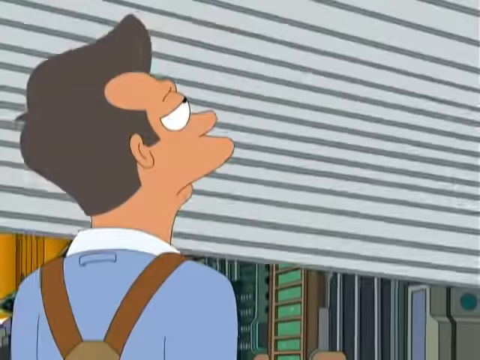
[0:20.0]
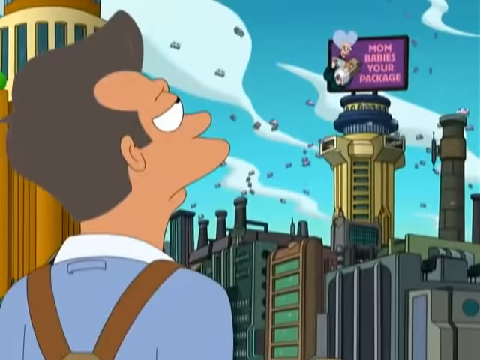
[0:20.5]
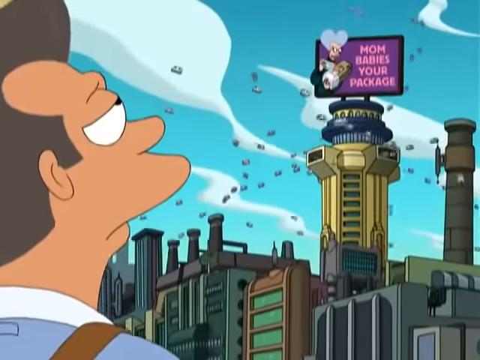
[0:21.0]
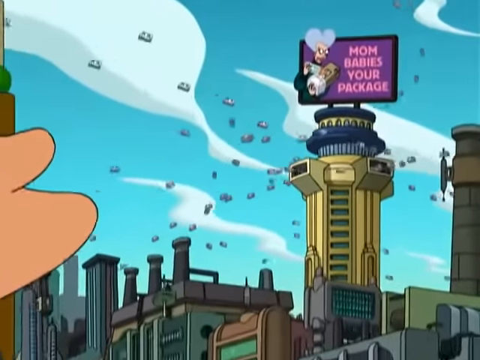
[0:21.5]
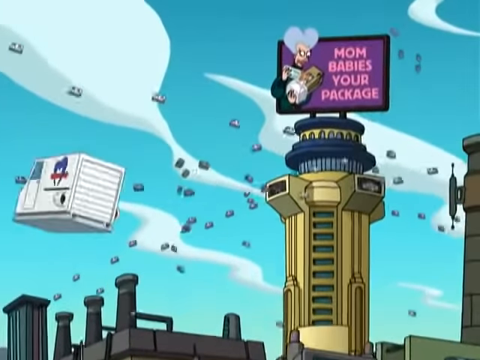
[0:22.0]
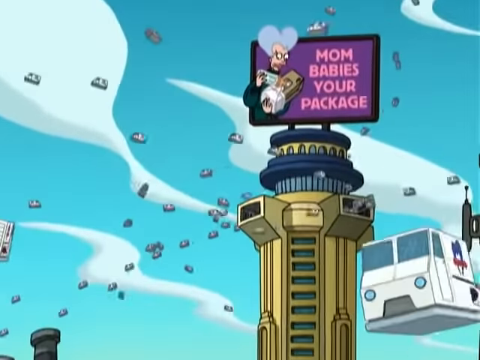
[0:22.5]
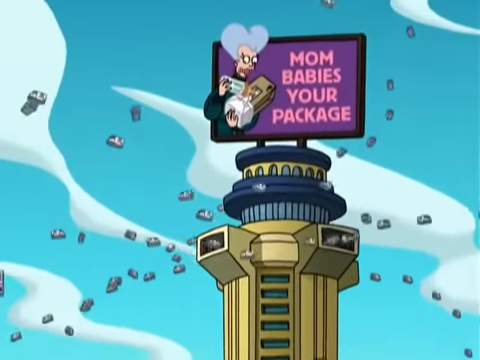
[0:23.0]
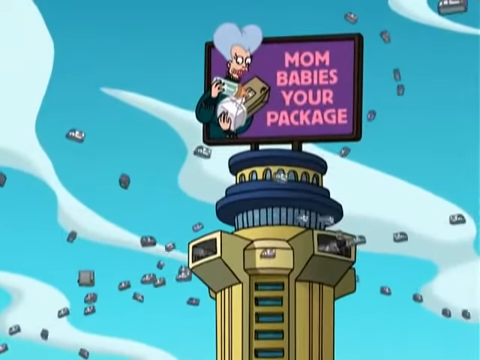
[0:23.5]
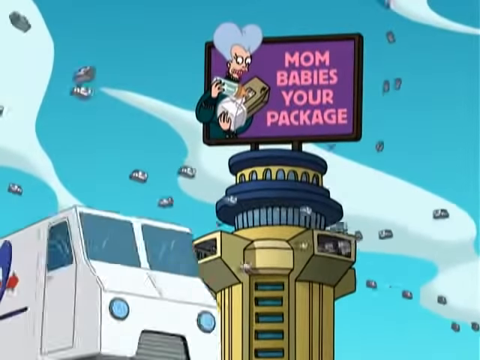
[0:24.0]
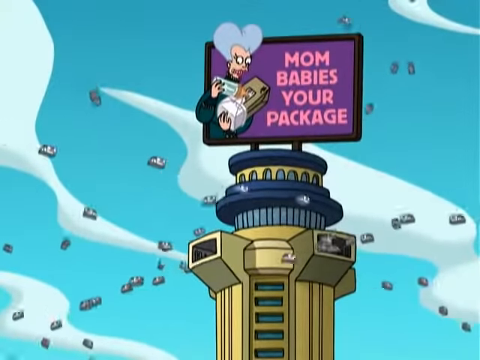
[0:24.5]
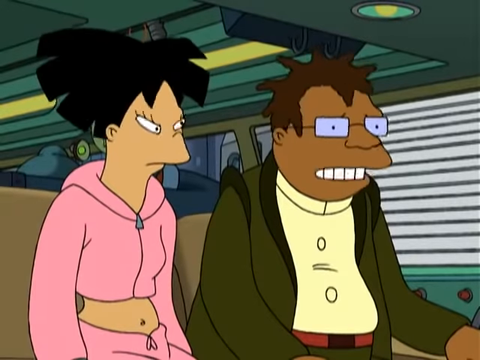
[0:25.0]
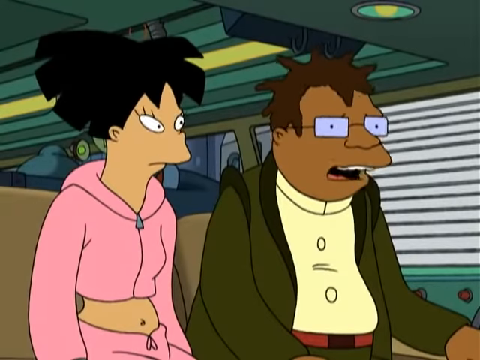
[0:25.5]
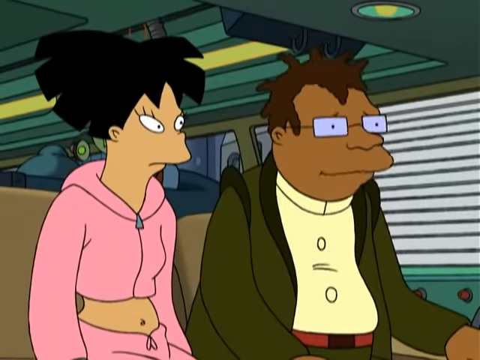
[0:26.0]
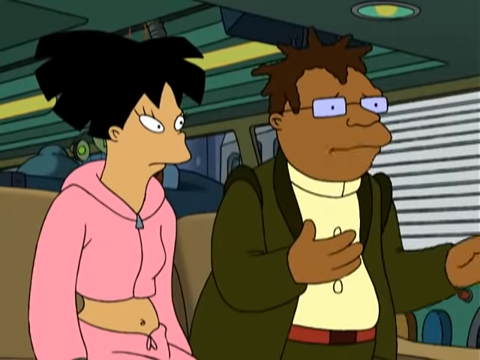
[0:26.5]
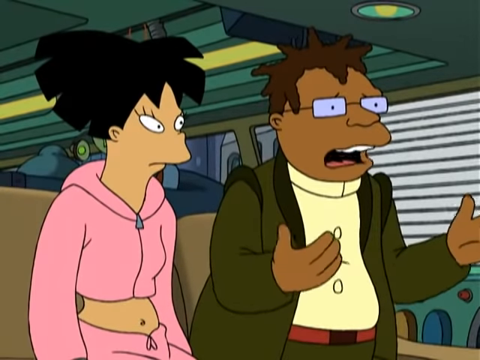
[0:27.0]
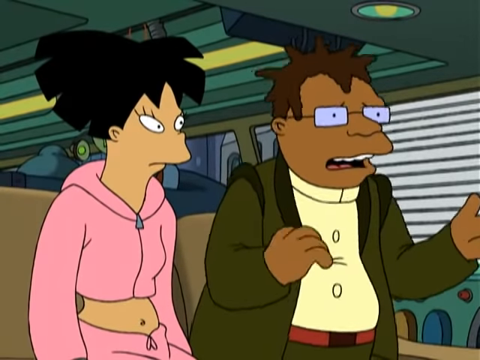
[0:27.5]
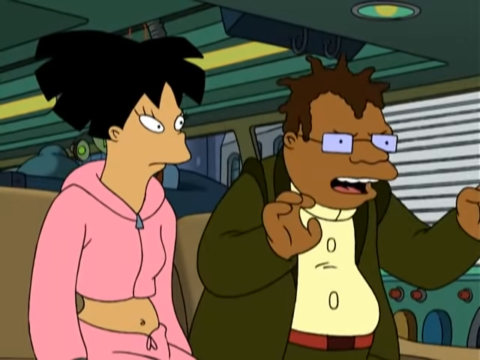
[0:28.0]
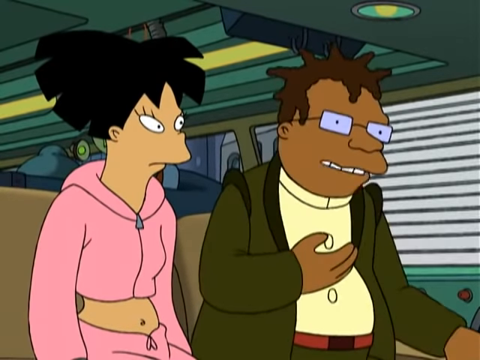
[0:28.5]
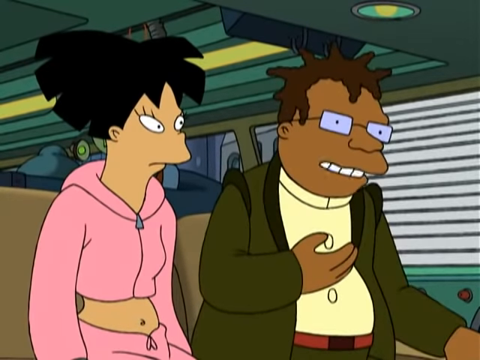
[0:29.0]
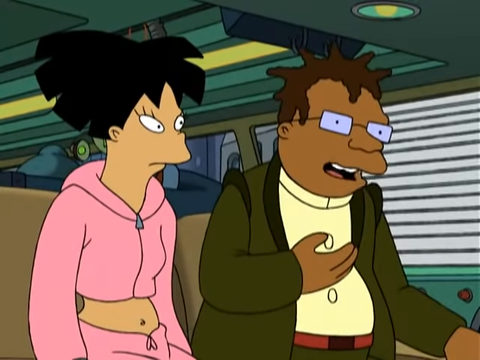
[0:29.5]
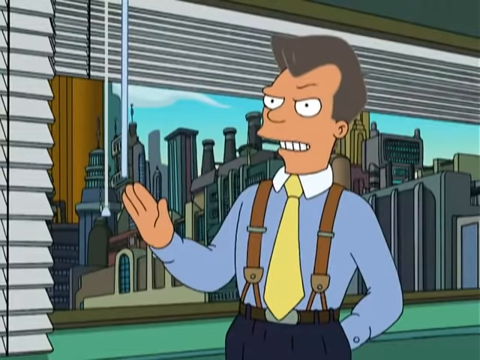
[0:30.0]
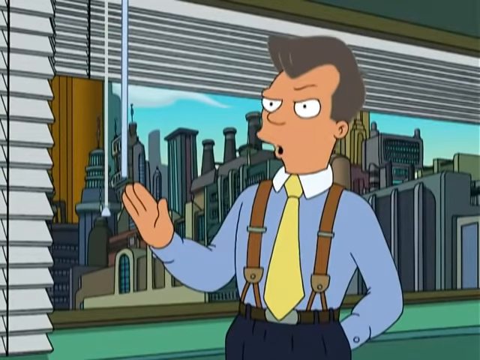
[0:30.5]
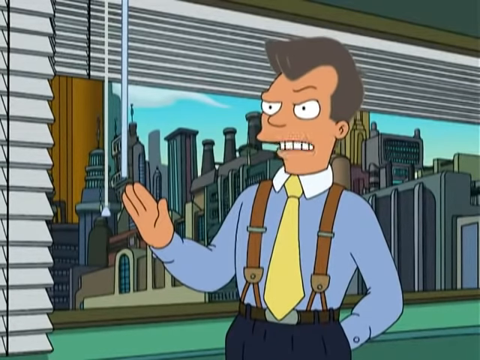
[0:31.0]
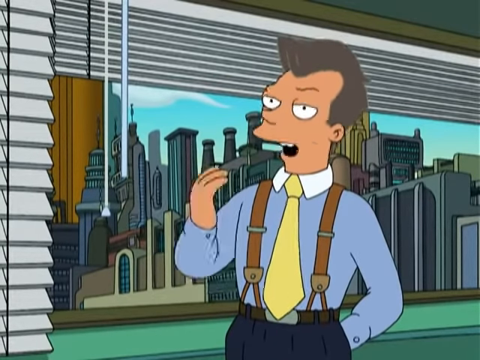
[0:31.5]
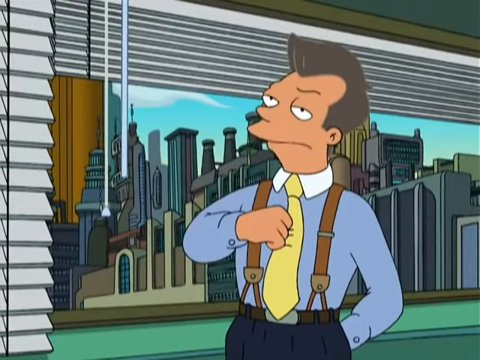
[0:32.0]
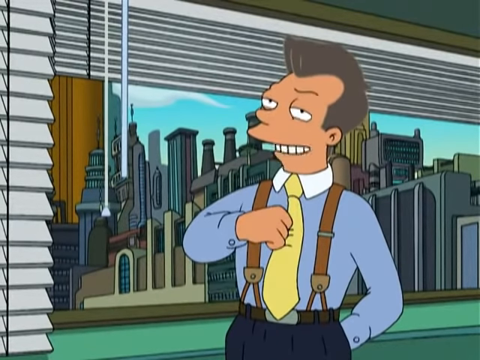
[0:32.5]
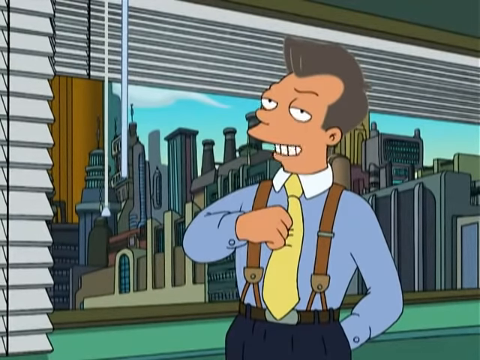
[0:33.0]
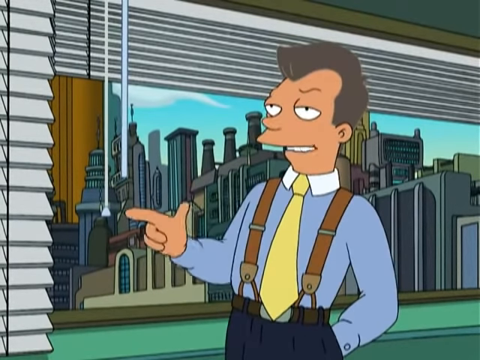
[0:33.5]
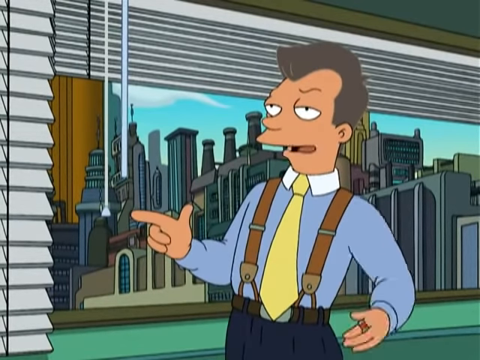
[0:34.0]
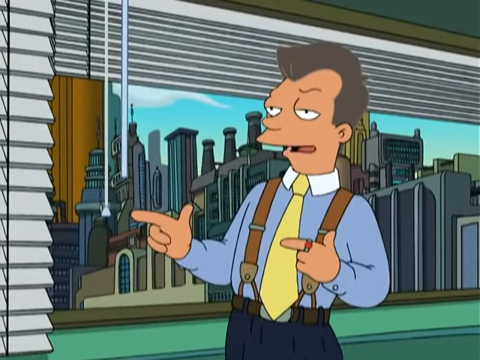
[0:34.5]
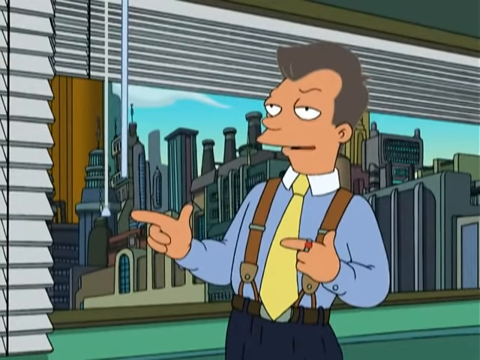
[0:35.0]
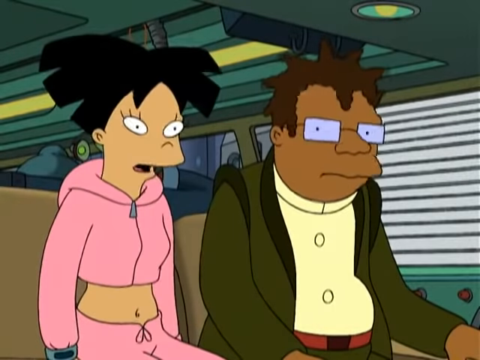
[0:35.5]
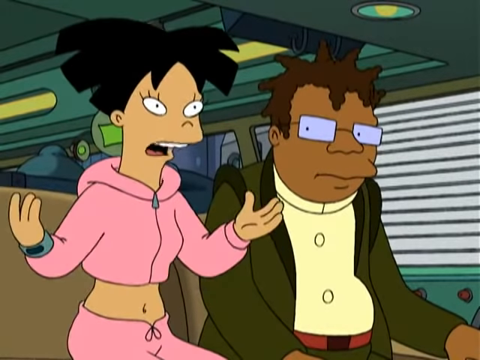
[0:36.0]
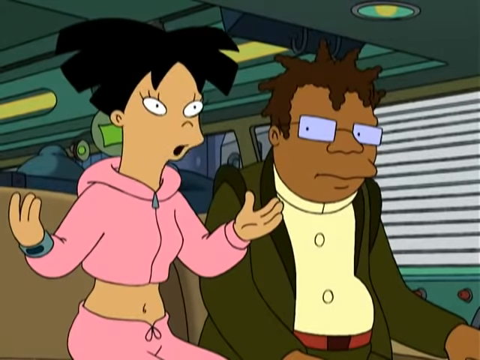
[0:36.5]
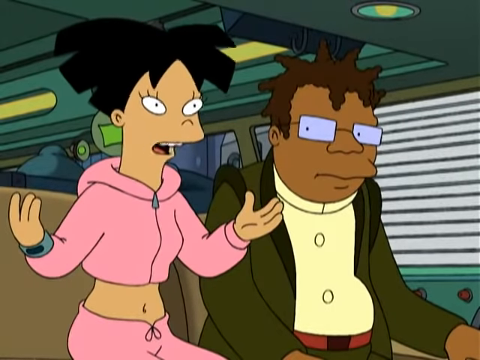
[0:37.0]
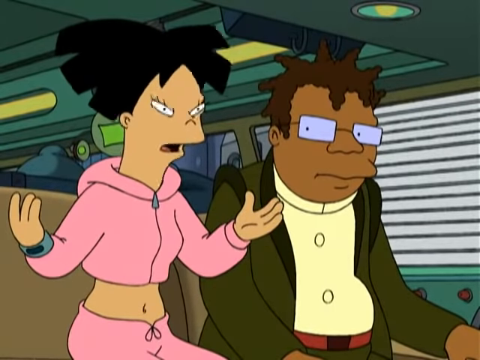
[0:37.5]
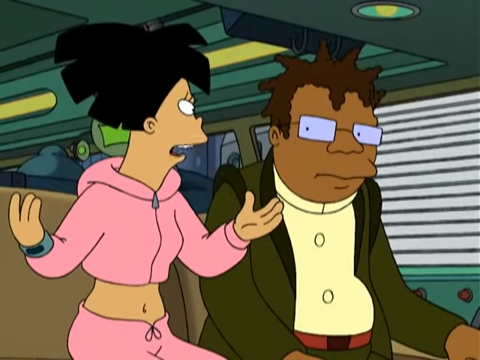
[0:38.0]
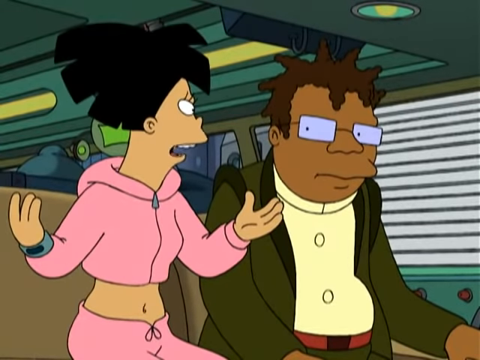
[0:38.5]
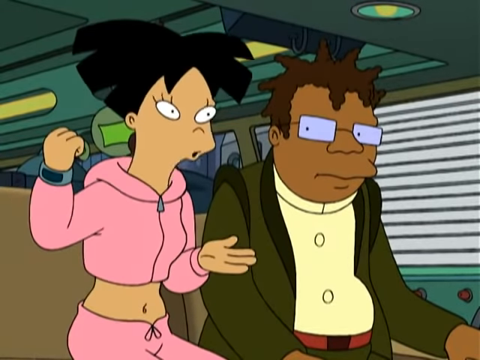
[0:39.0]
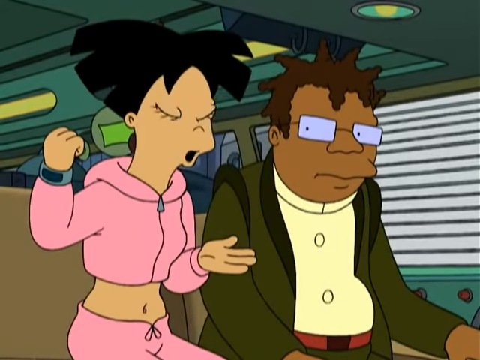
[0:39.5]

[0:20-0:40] The man in the blue shirt with suspenders stares up at the sky, looking at a sign that says "mommy's babies, your package". The scene then flips to a black man with glasses sitting next to a woman in a pink sweatsuit; the two are talking to the man in the blue shirt and yellow tie. The camera shifts back and forth between the two seated people, who appear to be having a conversation or a debate. The woman in the sweatsuit apparently holds her hands up and punches her fist.